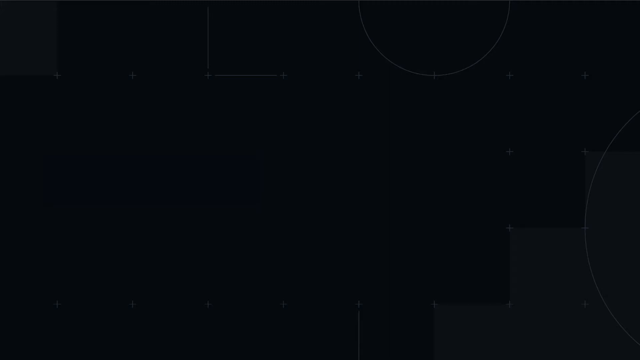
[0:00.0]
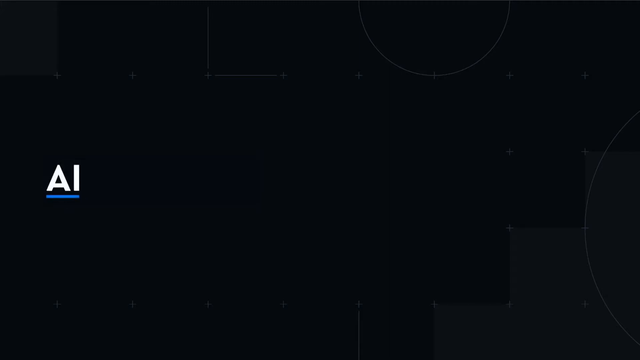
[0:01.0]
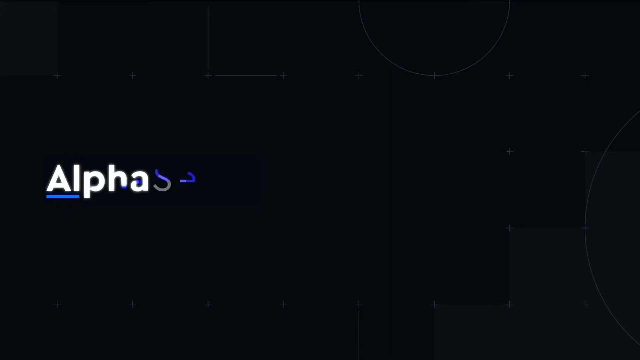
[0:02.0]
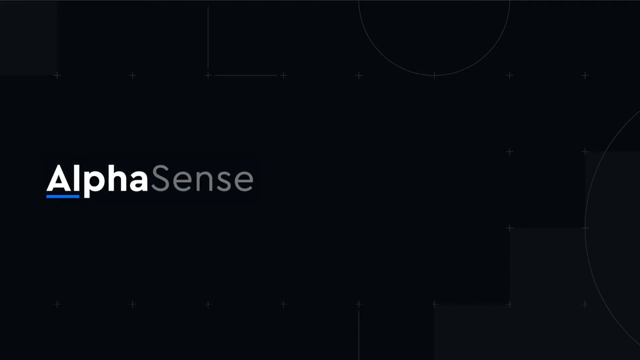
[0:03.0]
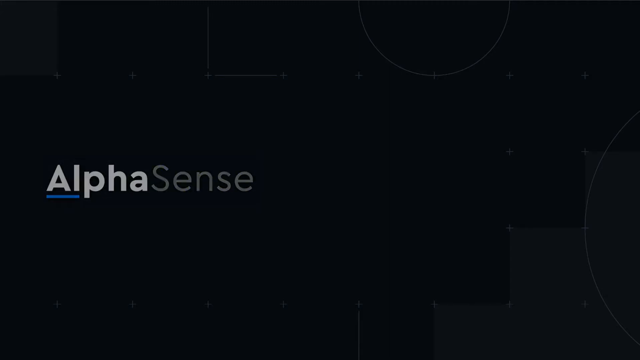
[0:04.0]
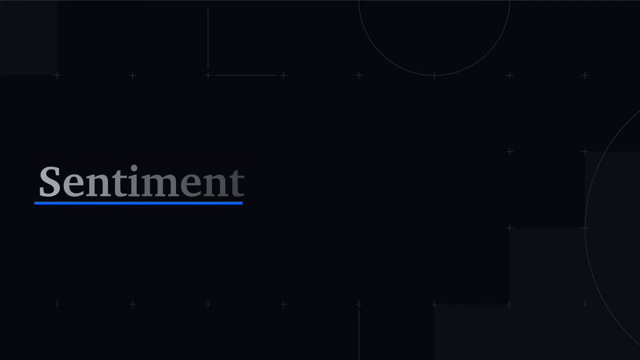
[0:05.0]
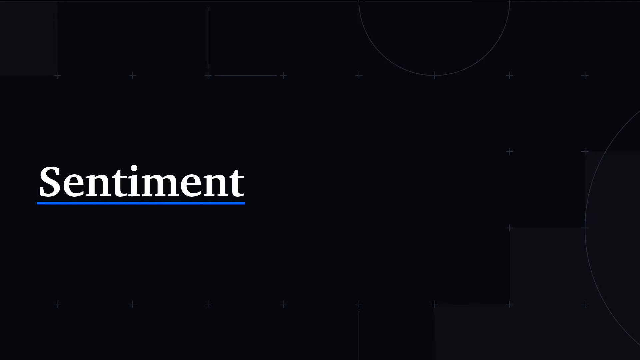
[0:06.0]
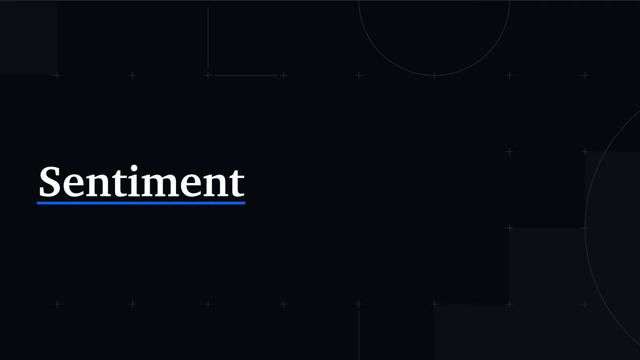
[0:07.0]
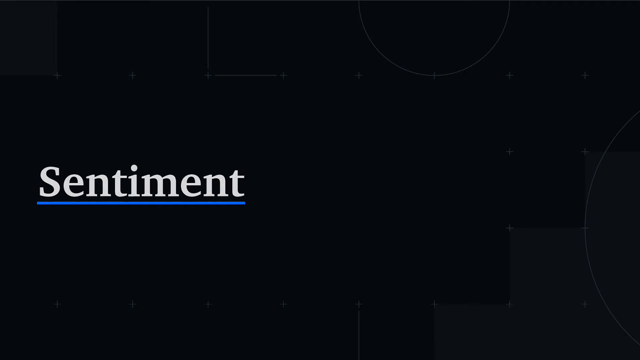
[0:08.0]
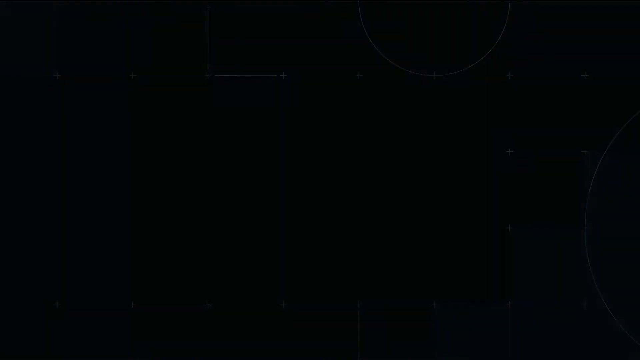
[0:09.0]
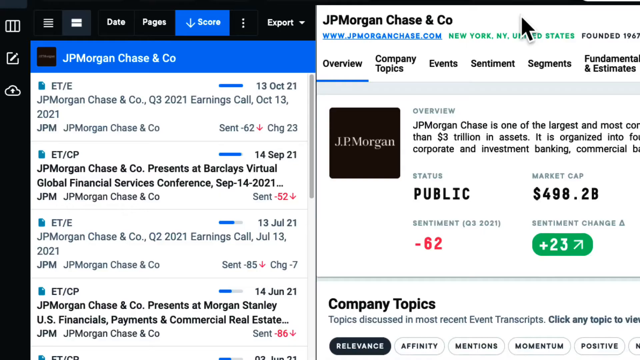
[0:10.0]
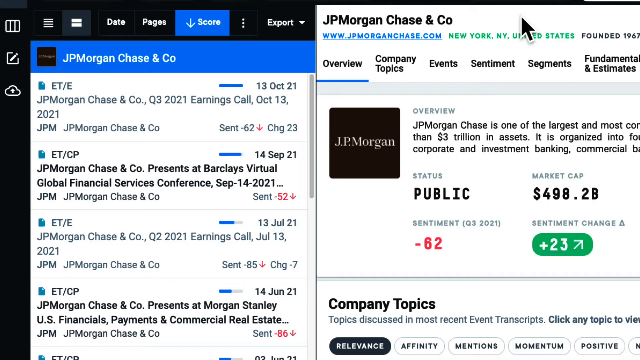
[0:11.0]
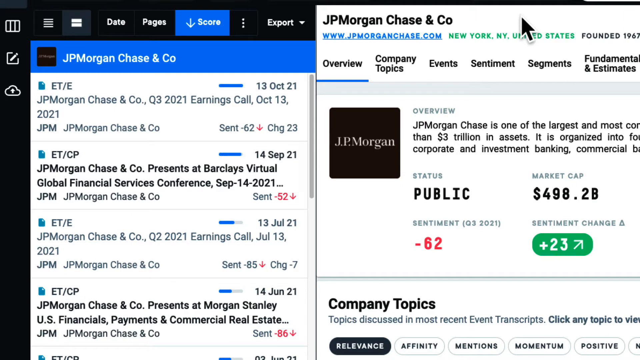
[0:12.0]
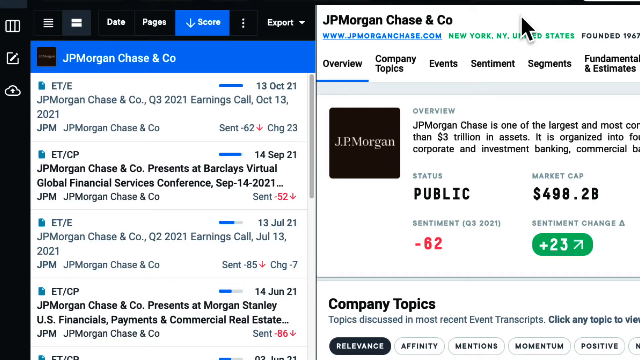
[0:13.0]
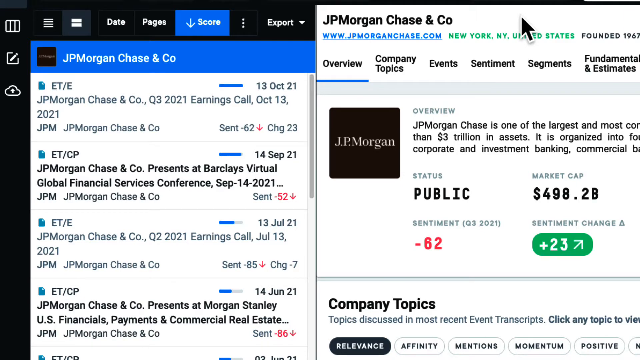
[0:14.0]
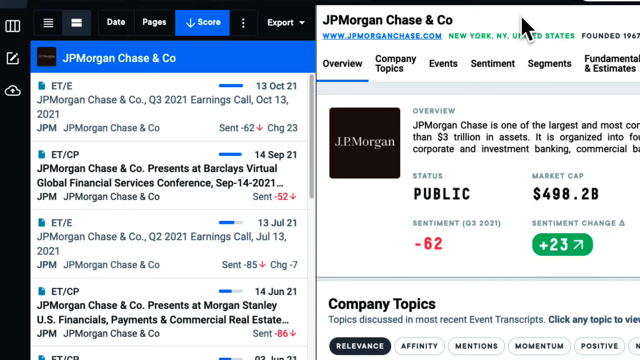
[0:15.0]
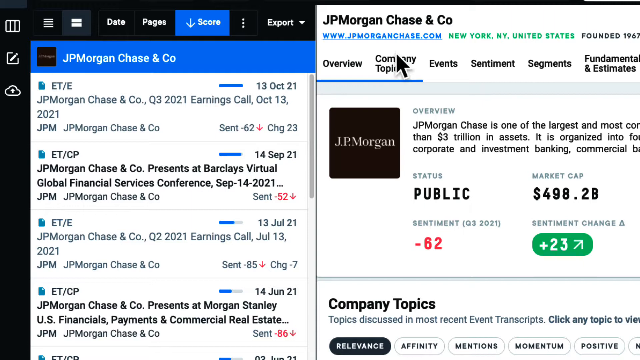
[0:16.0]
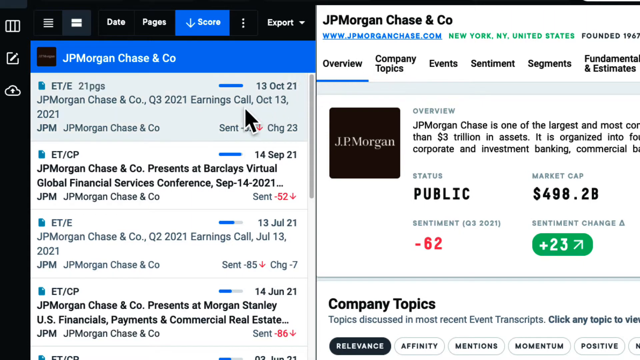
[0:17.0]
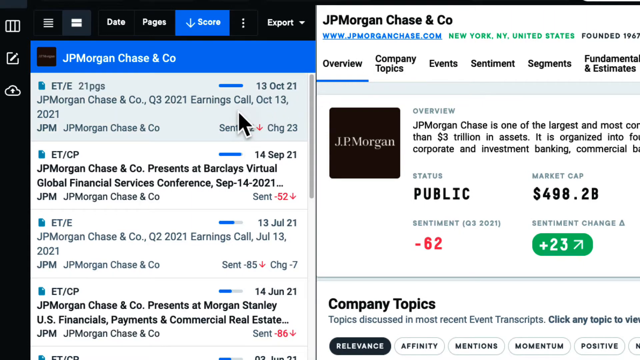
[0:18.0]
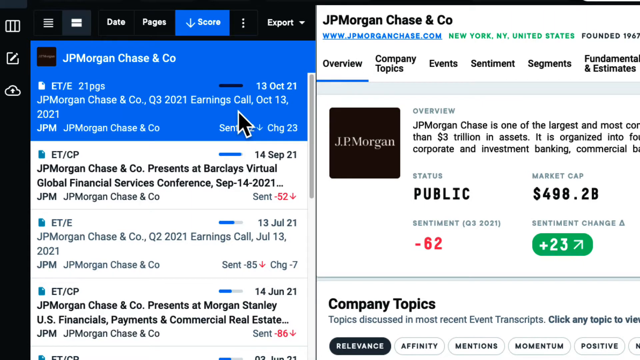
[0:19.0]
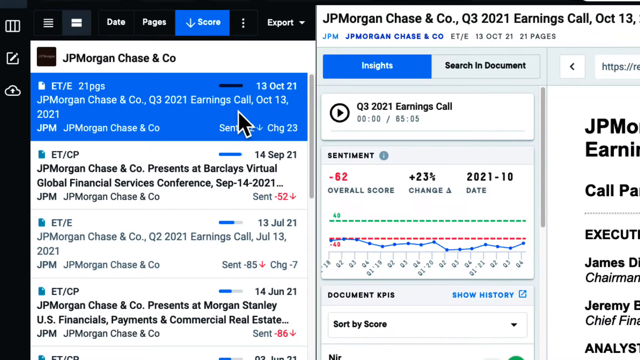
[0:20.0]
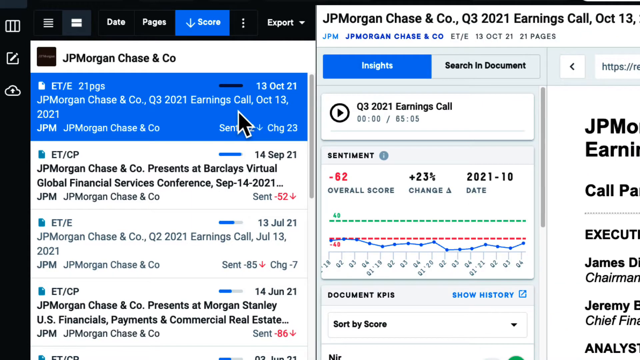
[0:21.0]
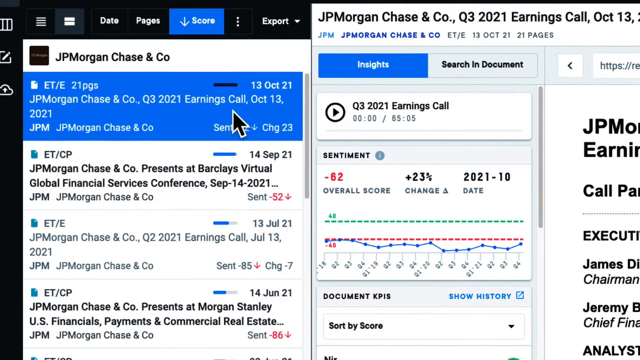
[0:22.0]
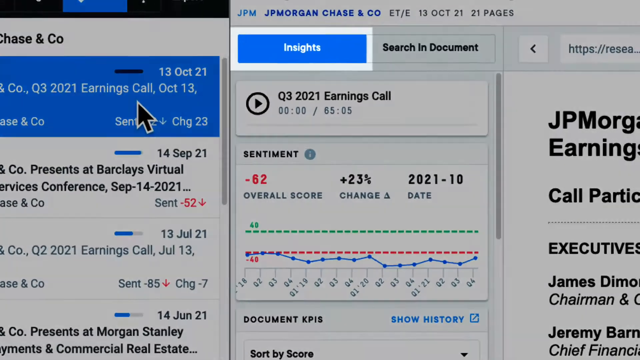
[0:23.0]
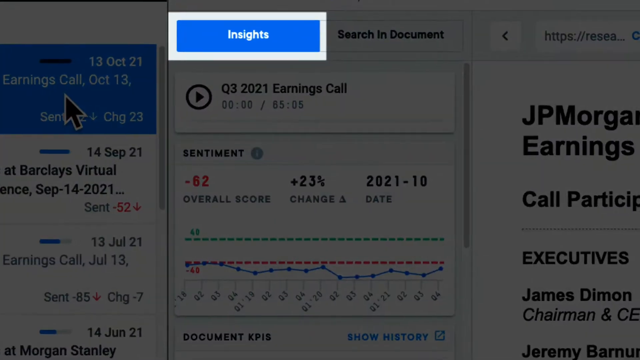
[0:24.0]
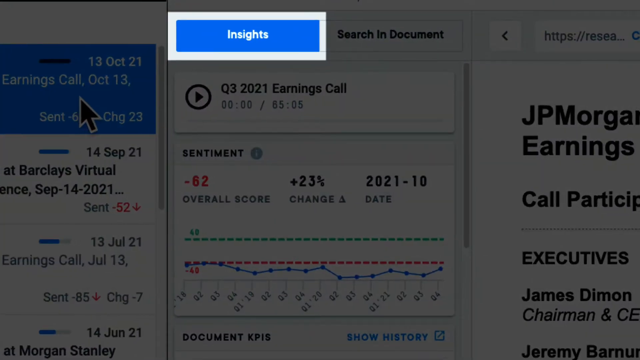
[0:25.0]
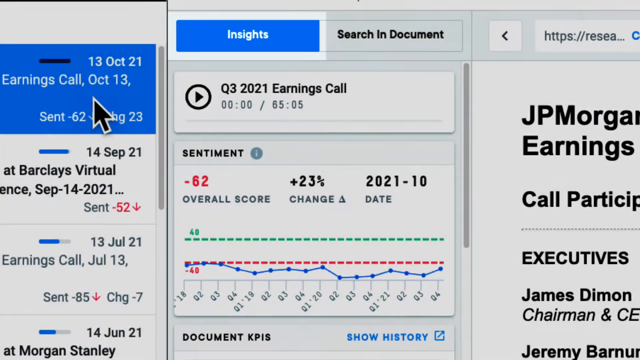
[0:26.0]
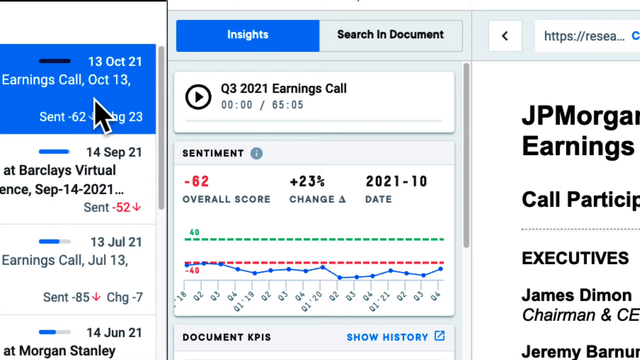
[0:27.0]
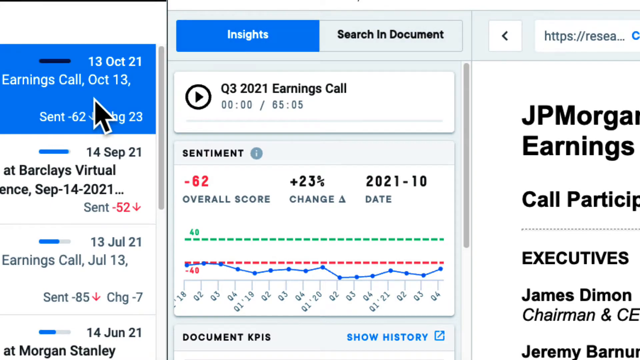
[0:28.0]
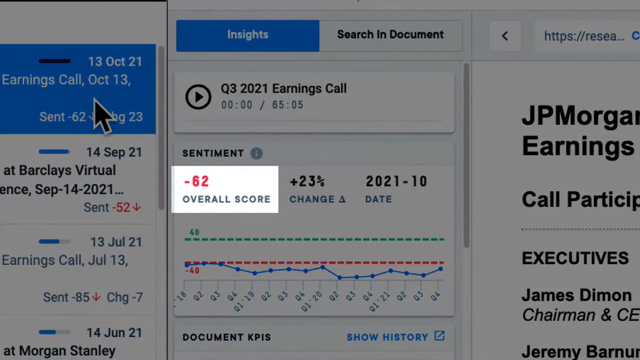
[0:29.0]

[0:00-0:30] The first screen says "sentiment." The next screen shows JP Morgan Chase and company, and then things flash up to insights, which is in a blue rectangle. To the left is the earnings call of October 13th, 2021, in blue. At the same time, to the right, there is a close-up of sentiment: negative 62 overall score, with a change of plus 2.3%, and "2021-10". On the screen are two dotted lines: a green one with a positive 40 above it, and a red one with a negative 40 below it. Below that is a graph of plots with a blue line connecting them, running from the far left to the right. The leftmost point is almost up to the red dotted line above it, the line goes up and down, and at Q4 on the far right it is a point or two below 40.